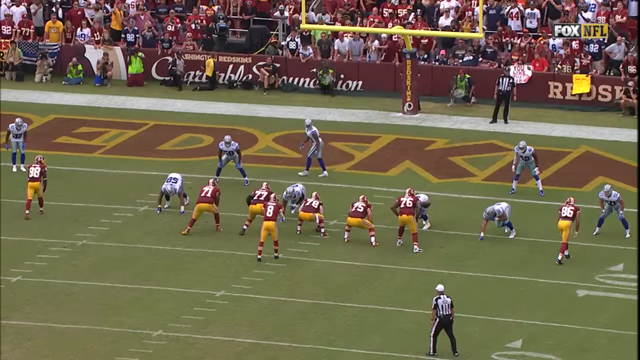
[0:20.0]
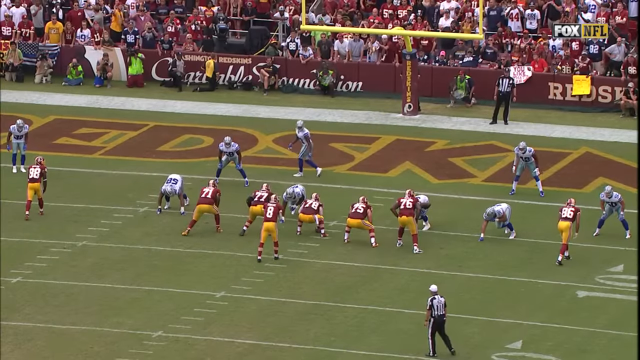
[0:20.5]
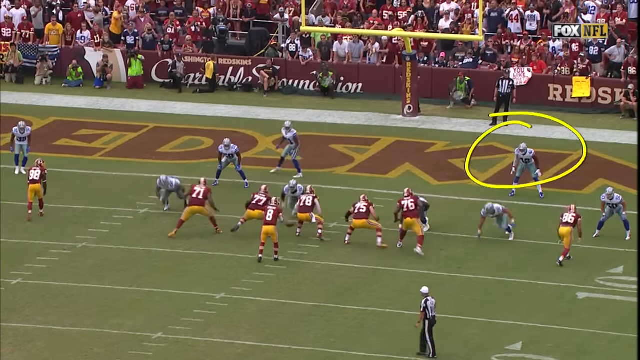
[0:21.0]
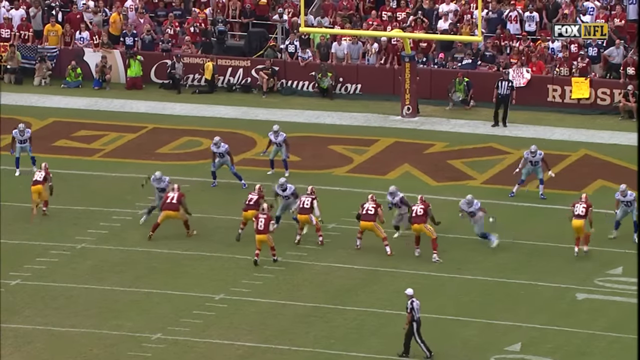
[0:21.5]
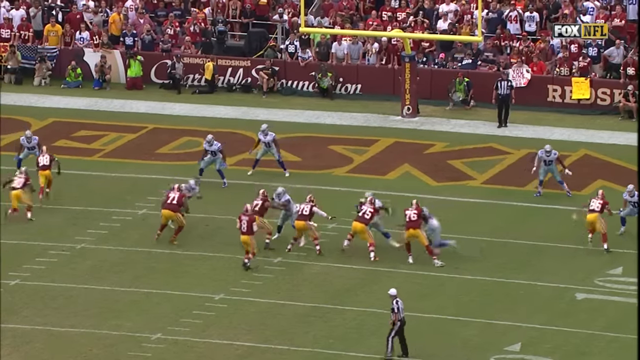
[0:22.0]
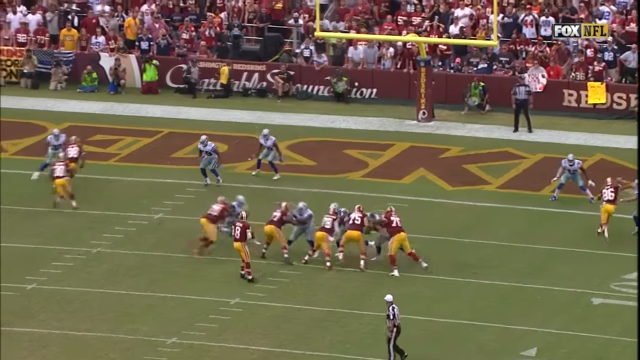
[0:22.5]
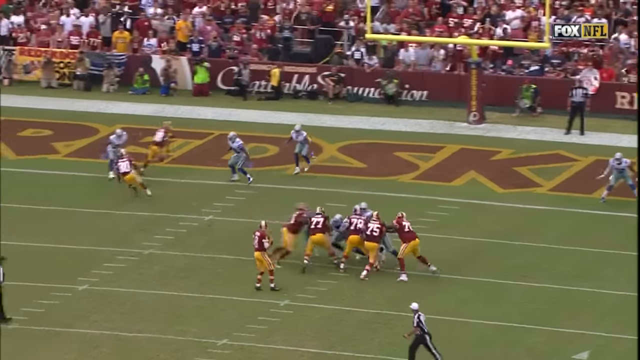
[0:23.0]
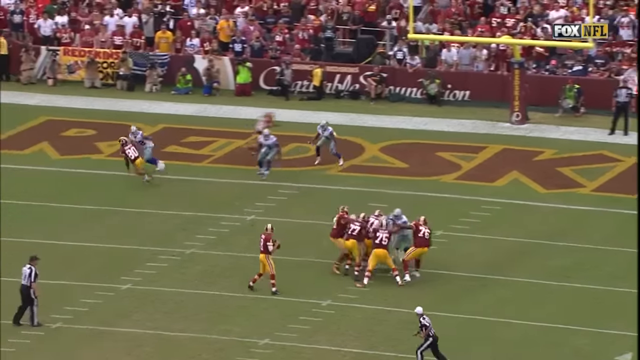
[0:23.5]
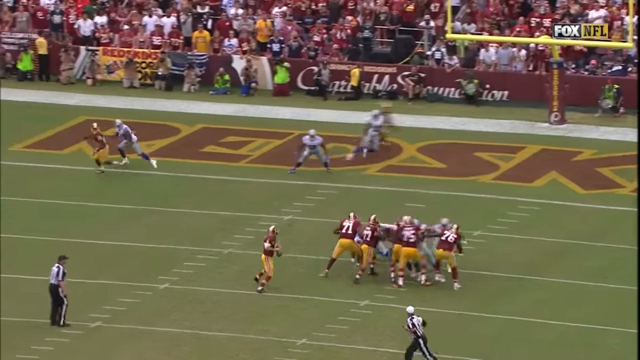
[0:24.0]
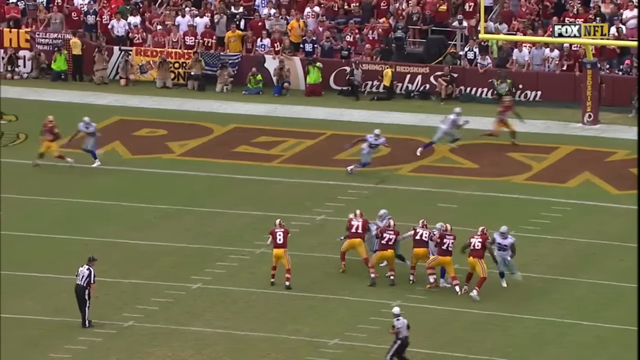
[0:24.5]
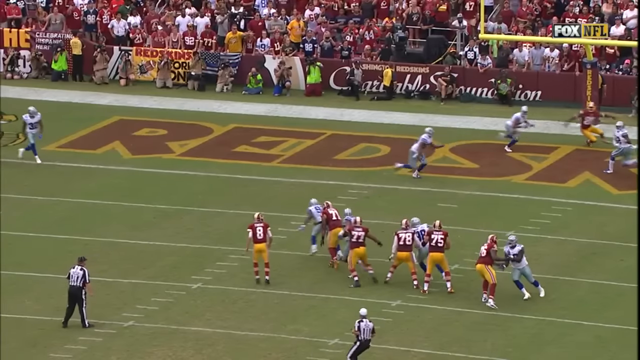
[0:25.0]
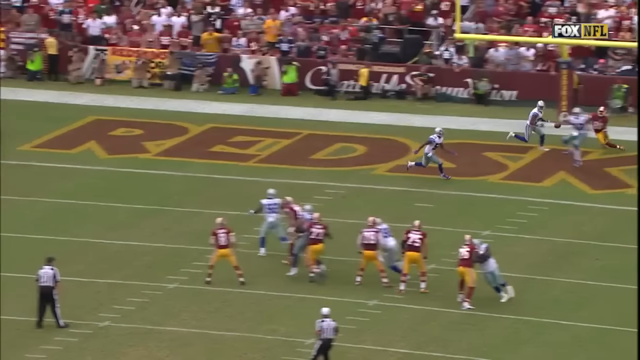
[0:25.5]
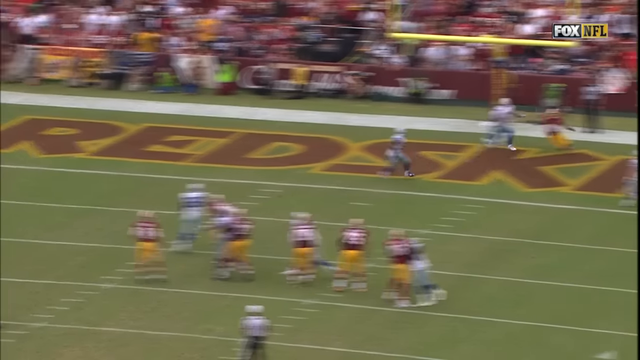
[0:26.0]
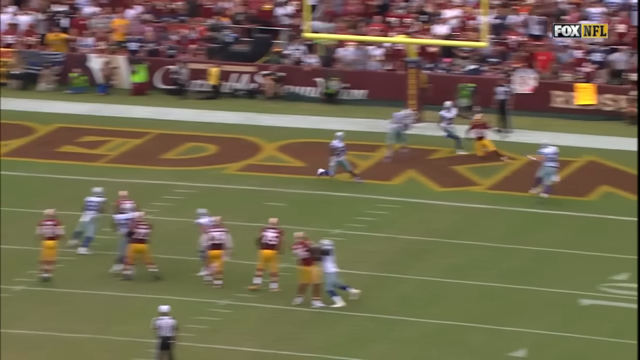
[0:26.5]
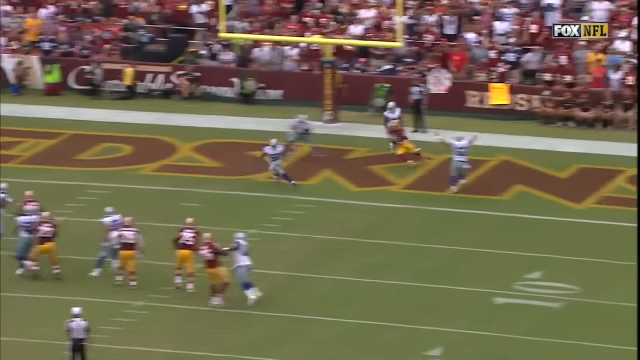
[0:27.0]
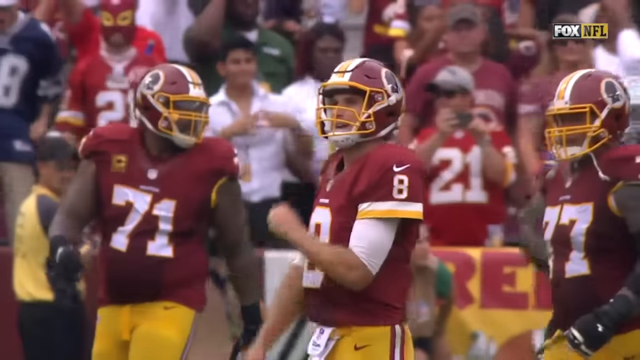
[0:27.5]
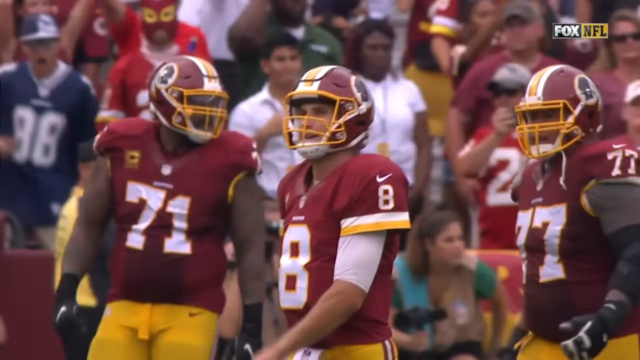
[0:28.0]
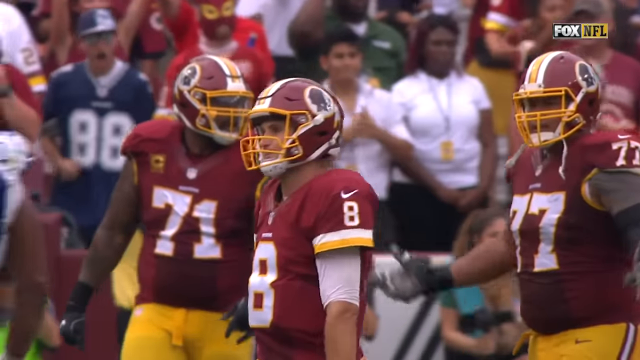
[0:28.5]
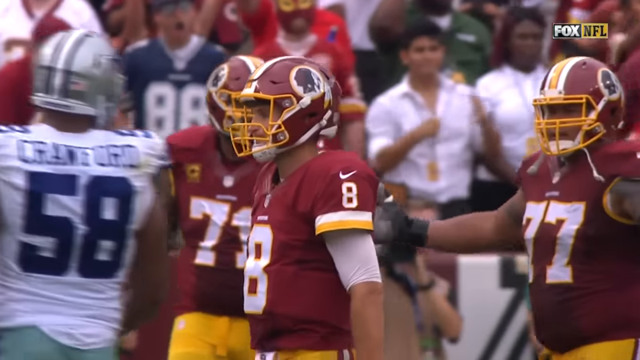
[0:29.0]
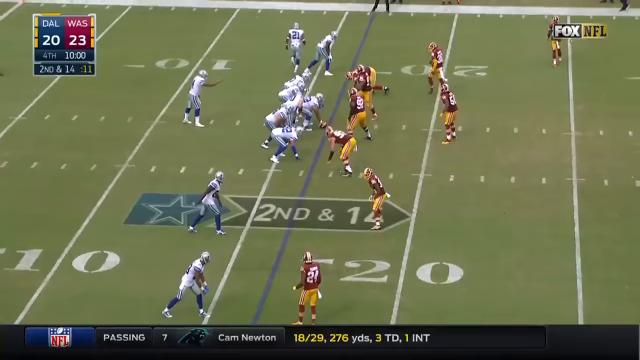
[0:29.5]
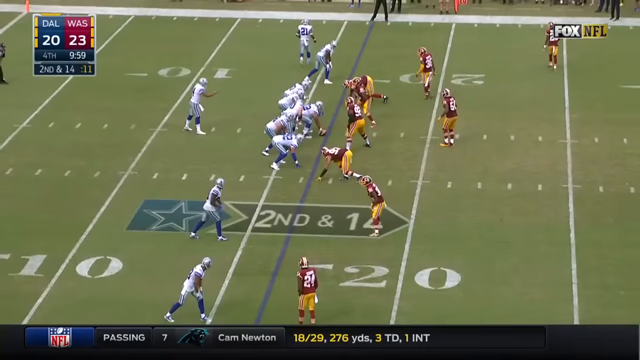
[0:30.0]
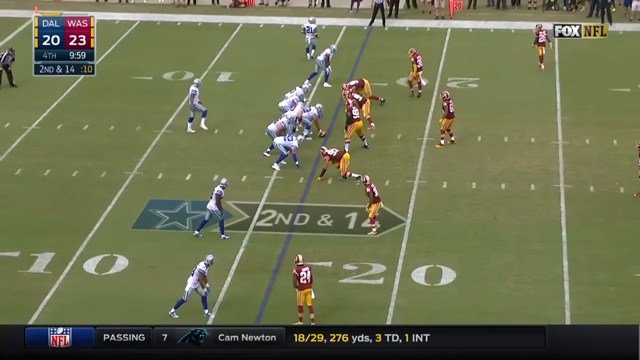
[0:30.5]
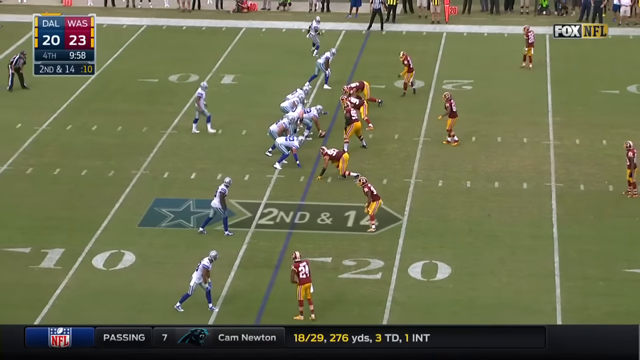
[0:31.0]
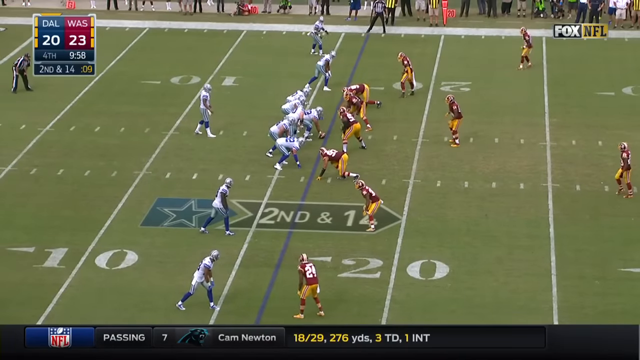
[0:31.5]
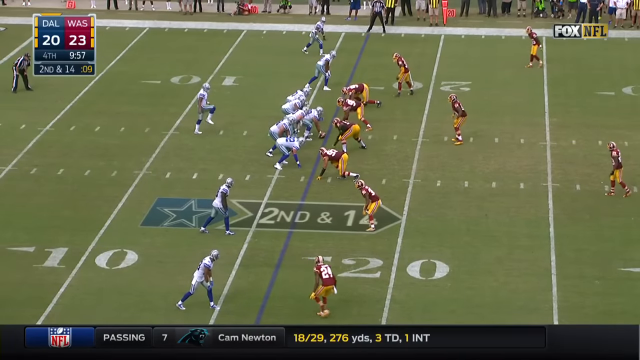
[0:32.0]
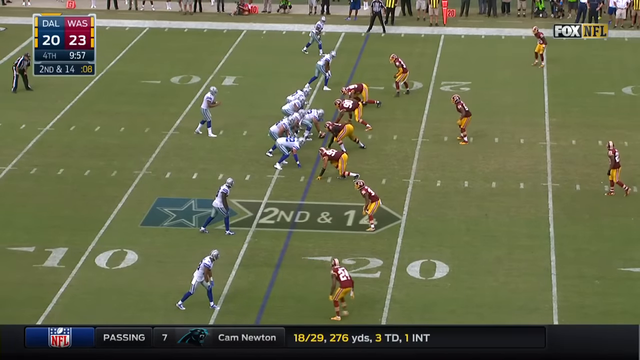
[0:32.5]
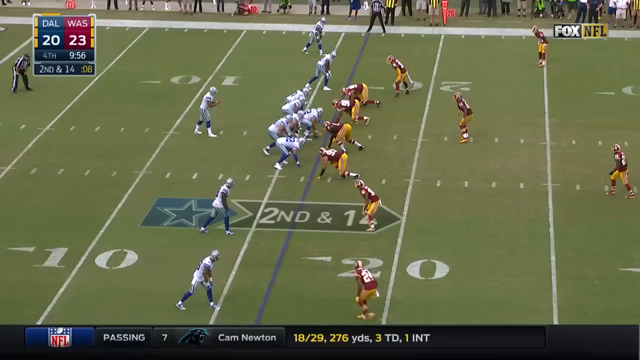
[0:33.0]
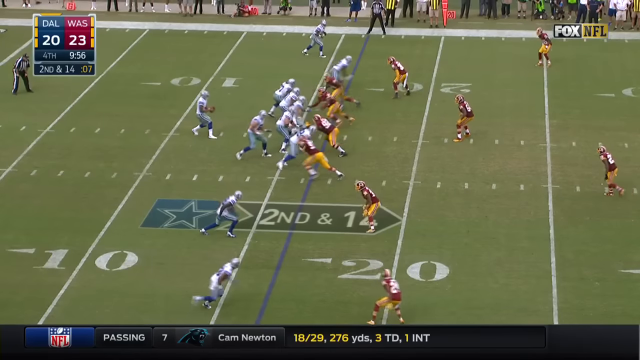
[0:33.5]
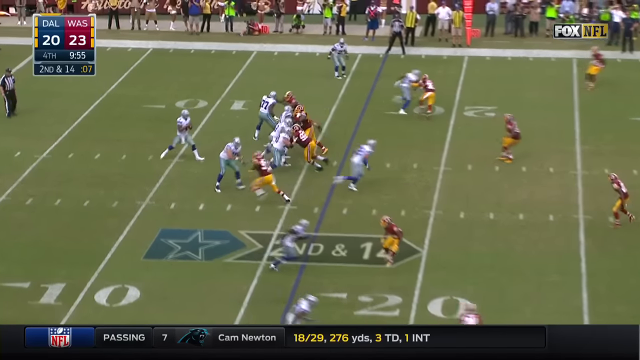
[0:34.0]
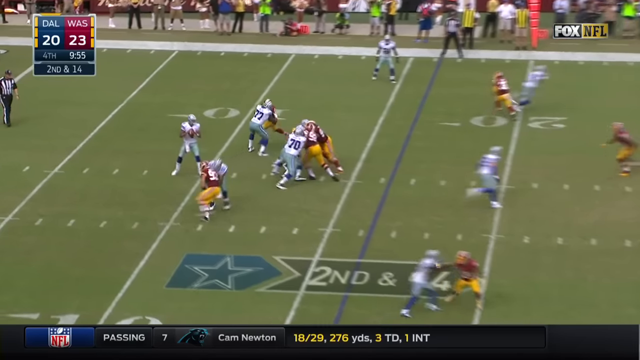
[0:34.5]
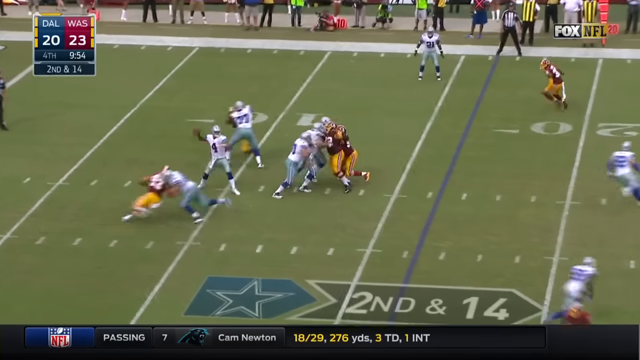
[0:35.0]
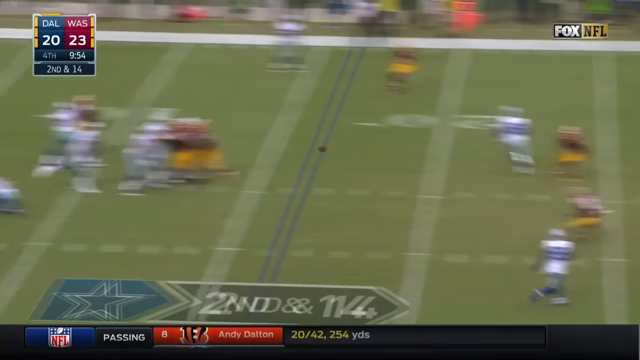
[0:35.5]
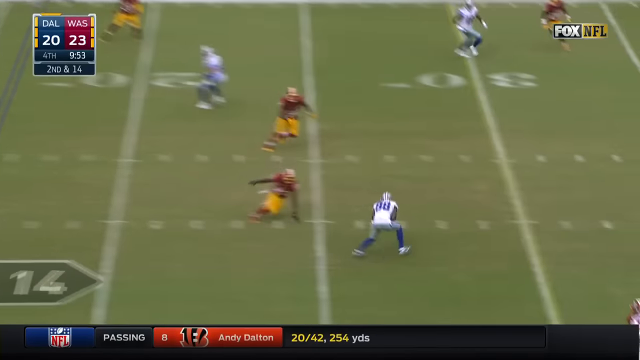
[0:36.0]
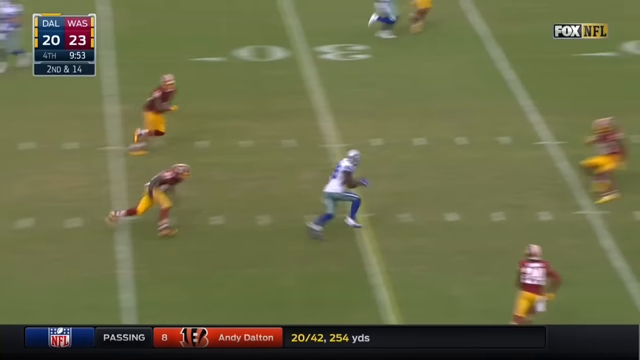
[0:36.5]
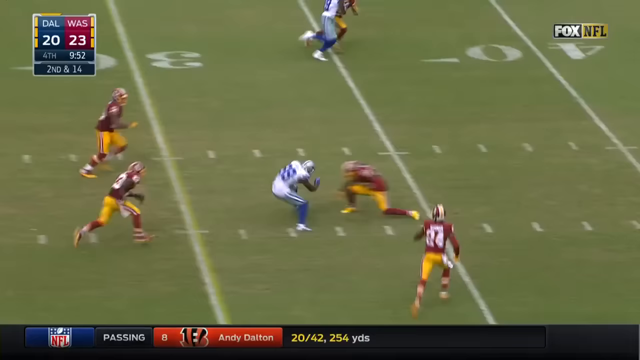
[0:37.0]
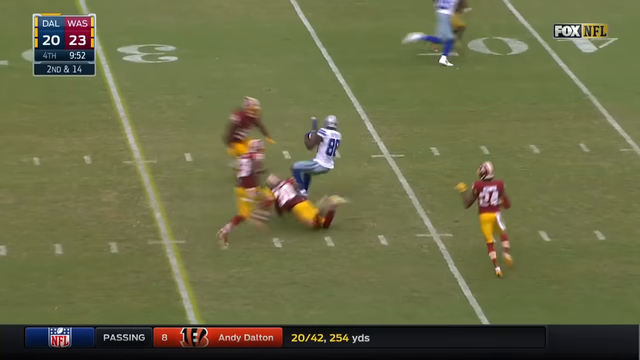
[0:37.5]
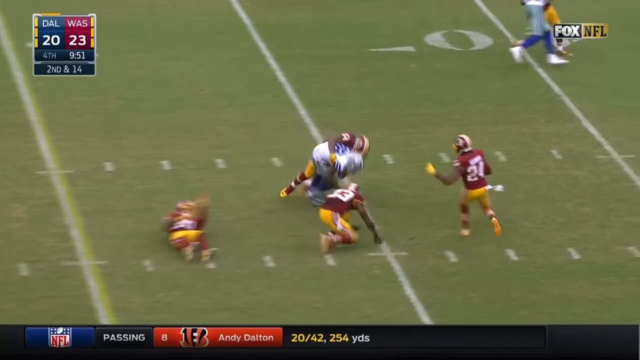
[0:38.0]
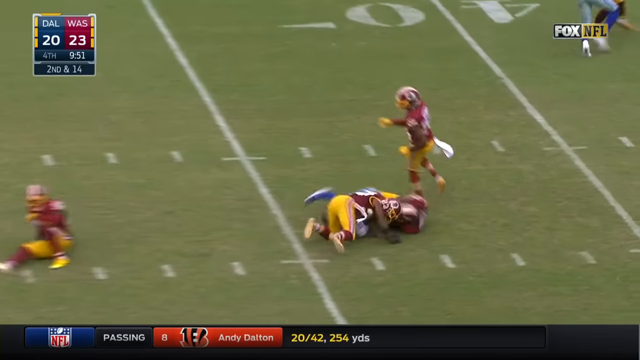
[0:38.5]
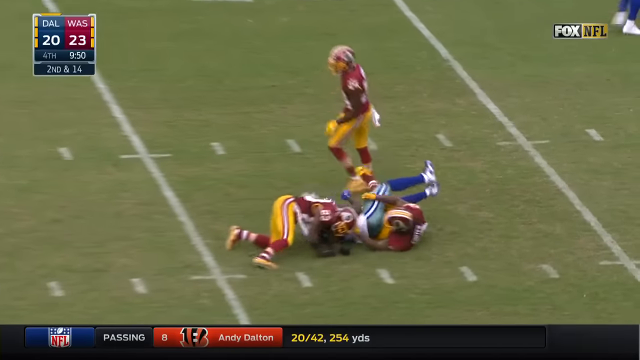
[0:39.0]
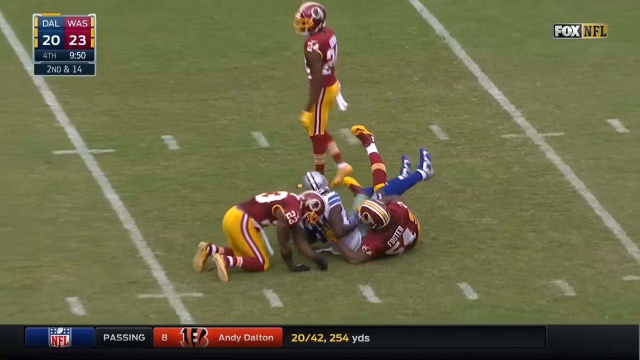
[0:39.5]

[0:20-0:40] A slow-motion instant replay begins from a different angle, an aerial view looking down at the backs of the Redskins, who are facing the end zone. A small yellow circle is drawn around the player who makes the interception. The quarterback fades back to about the 15-yard line and throws toward a receiver crossing from the left side of the screen to the right. The circled interceptor, who had been watching the play, runs directly in front of the Redskin receiver and catches the ball. The shot cuts to the Redskin players, who seem to be in disbelief. It then continues to a second and 14 play, taking place around the 16-yard line, with the Redskins on defense and Dallas on offense after the interception.